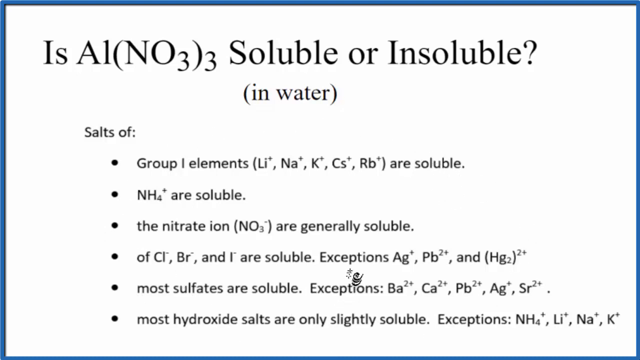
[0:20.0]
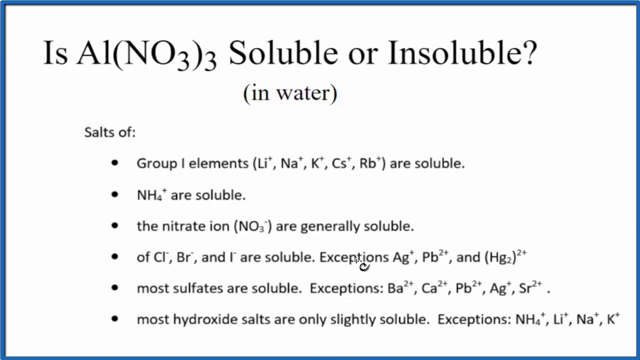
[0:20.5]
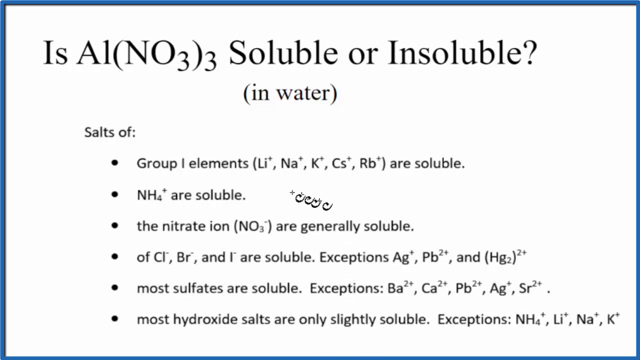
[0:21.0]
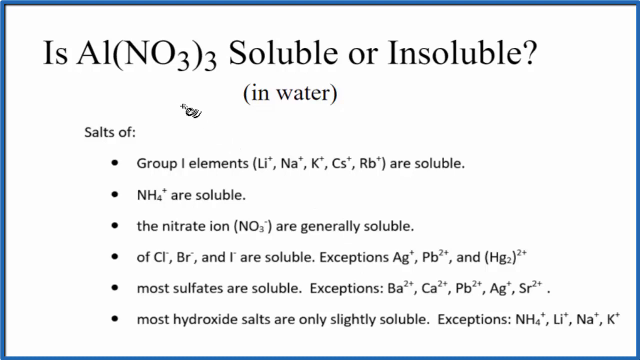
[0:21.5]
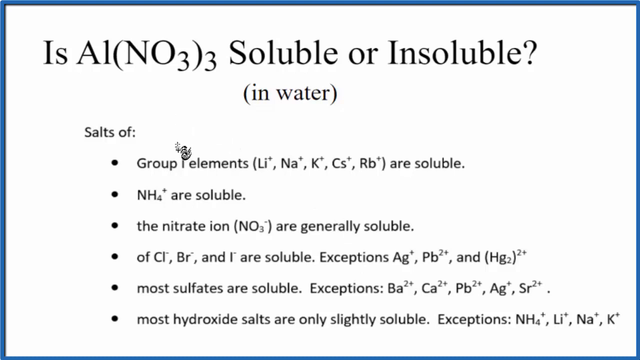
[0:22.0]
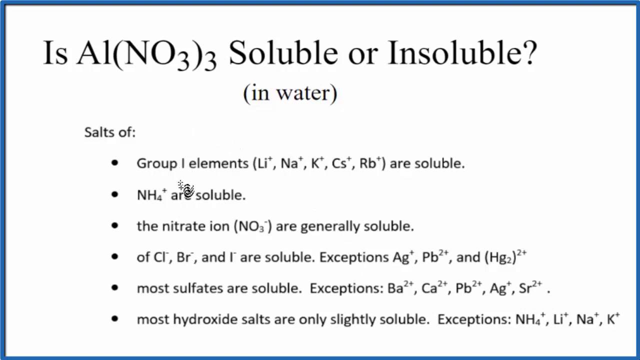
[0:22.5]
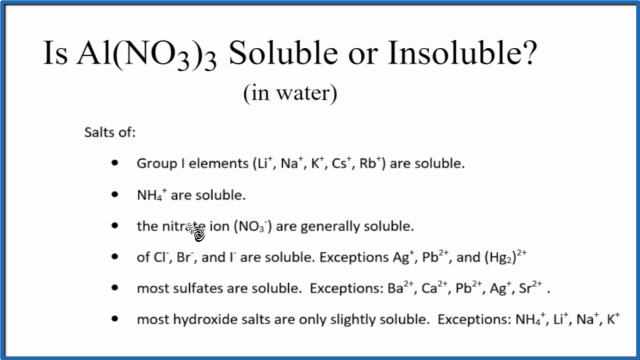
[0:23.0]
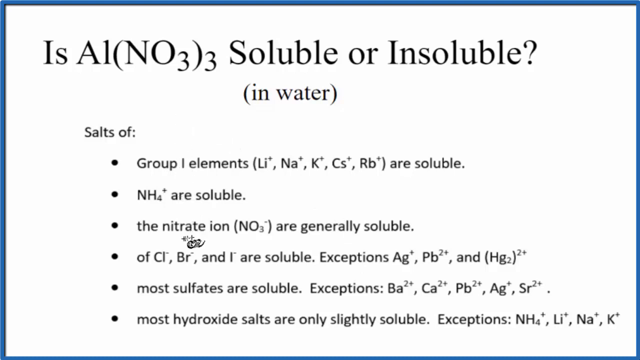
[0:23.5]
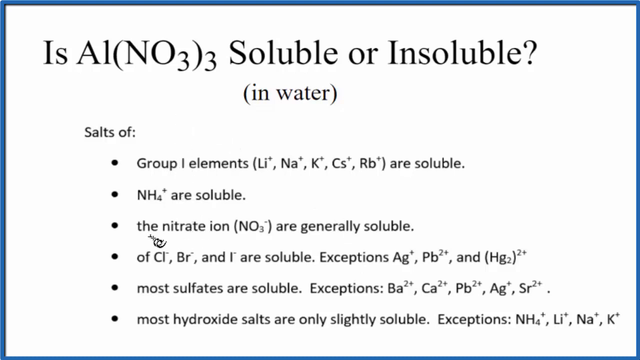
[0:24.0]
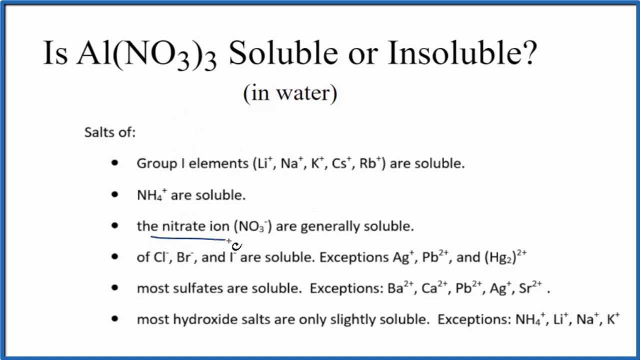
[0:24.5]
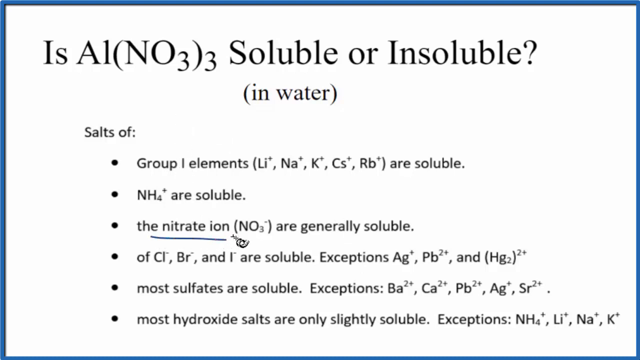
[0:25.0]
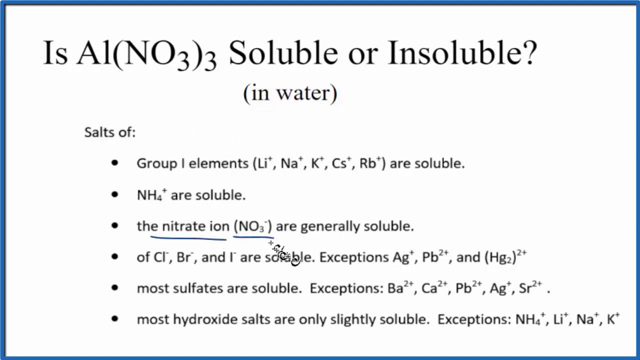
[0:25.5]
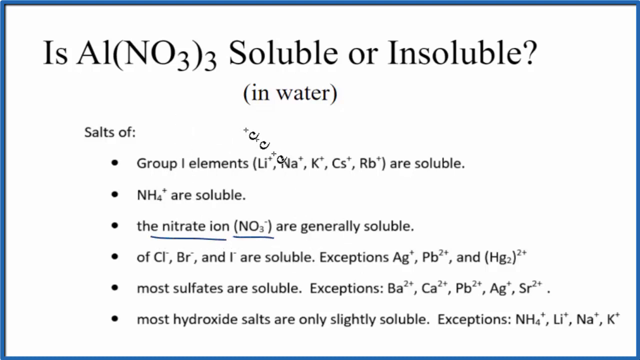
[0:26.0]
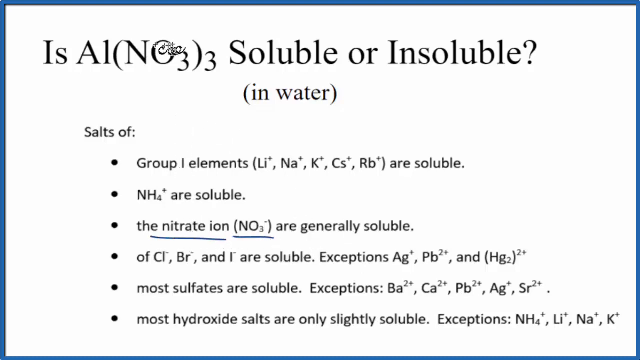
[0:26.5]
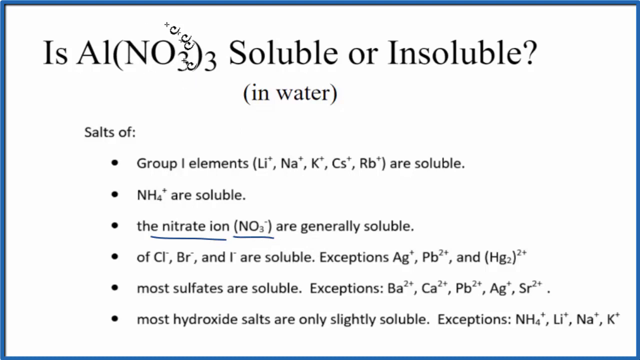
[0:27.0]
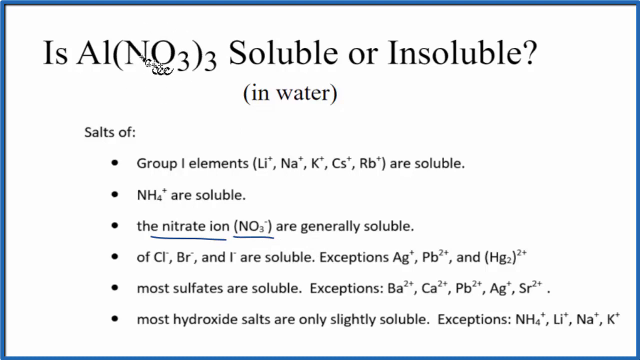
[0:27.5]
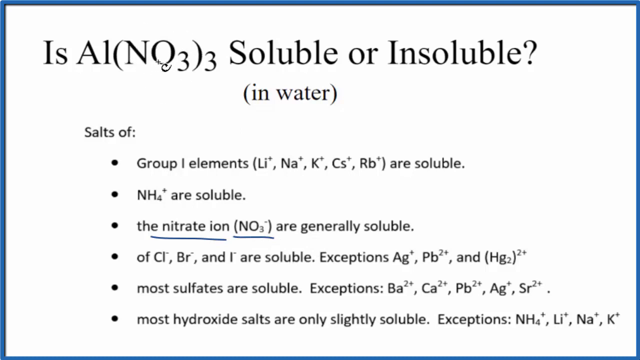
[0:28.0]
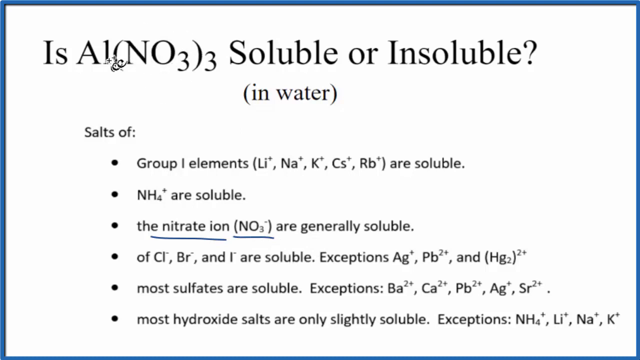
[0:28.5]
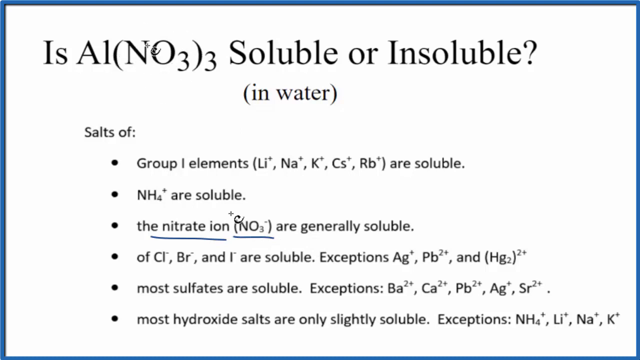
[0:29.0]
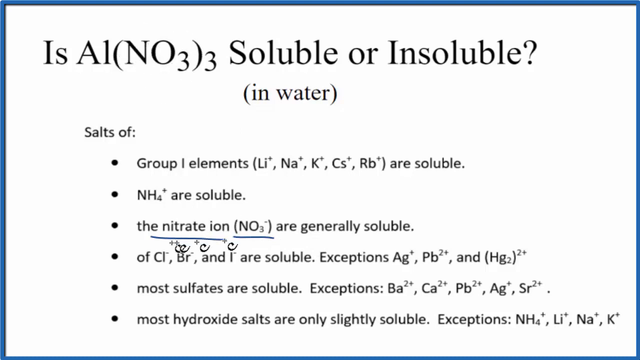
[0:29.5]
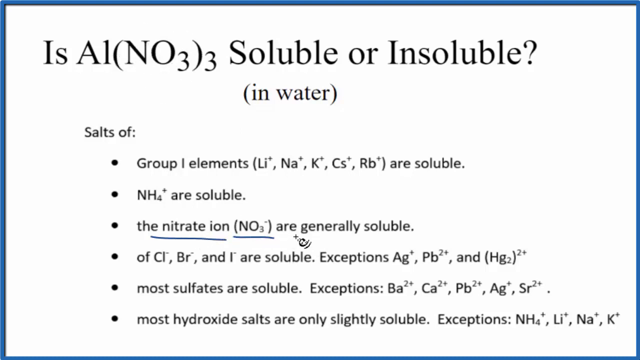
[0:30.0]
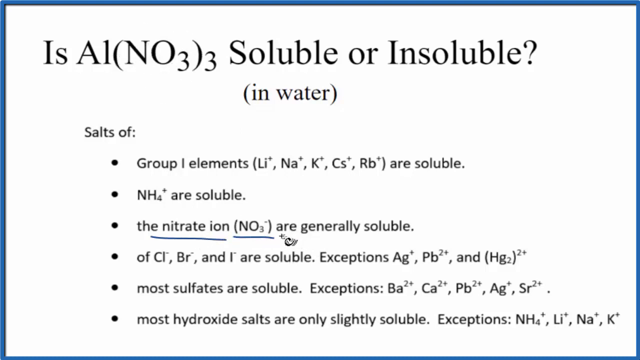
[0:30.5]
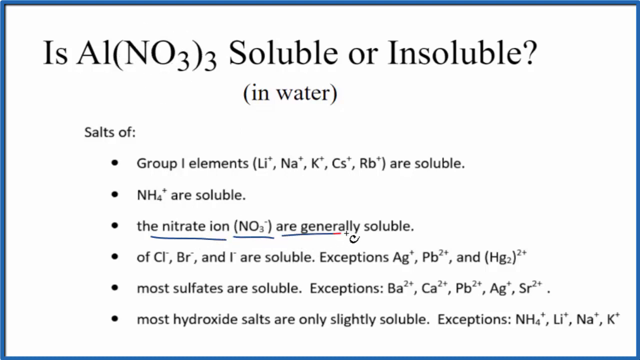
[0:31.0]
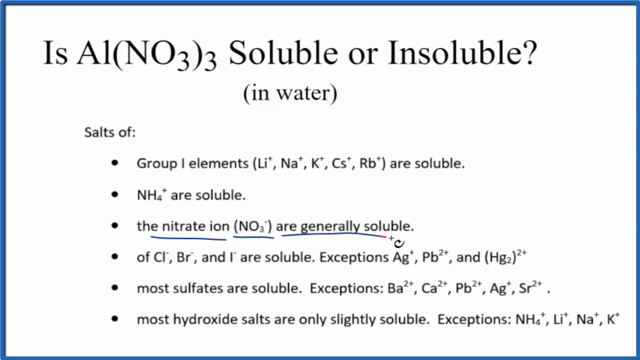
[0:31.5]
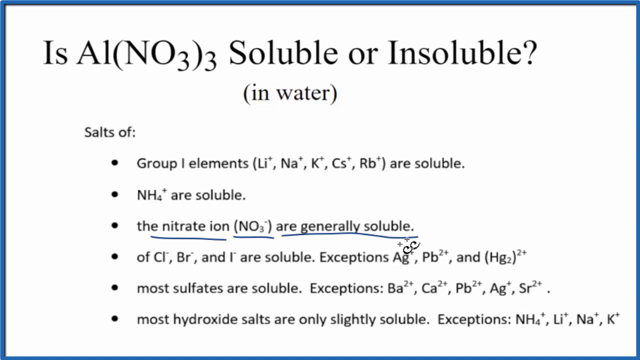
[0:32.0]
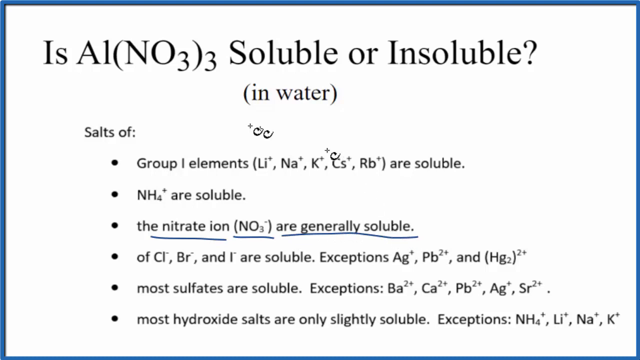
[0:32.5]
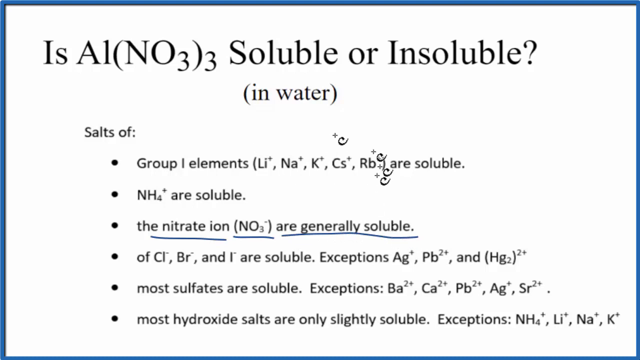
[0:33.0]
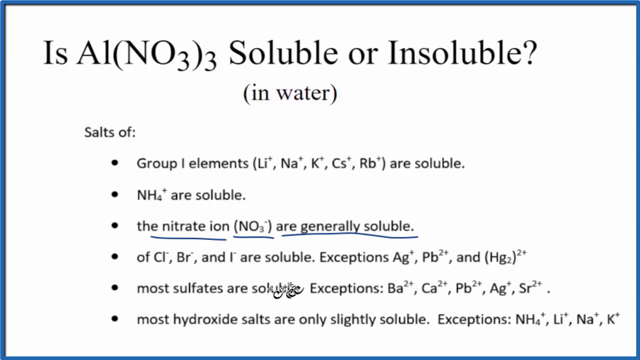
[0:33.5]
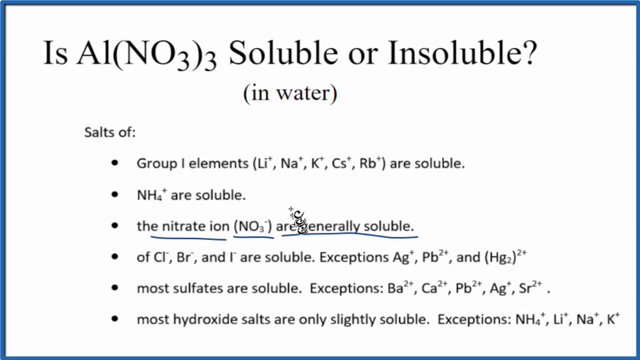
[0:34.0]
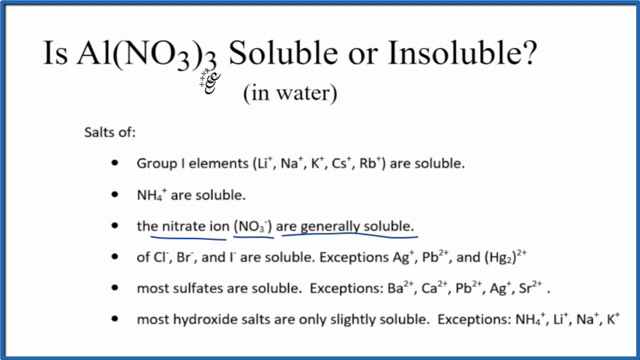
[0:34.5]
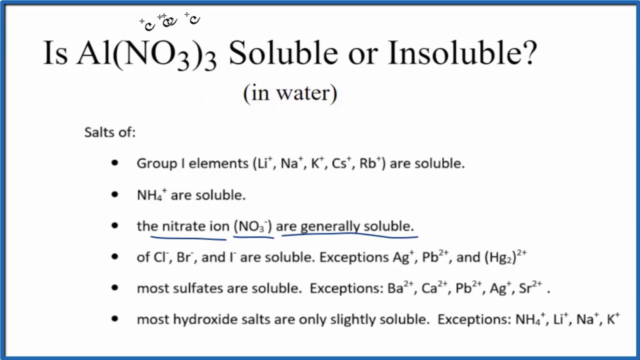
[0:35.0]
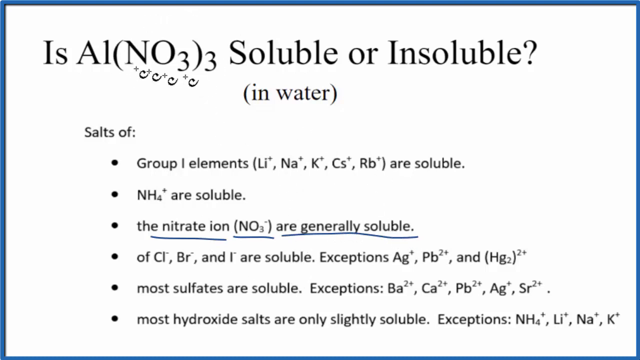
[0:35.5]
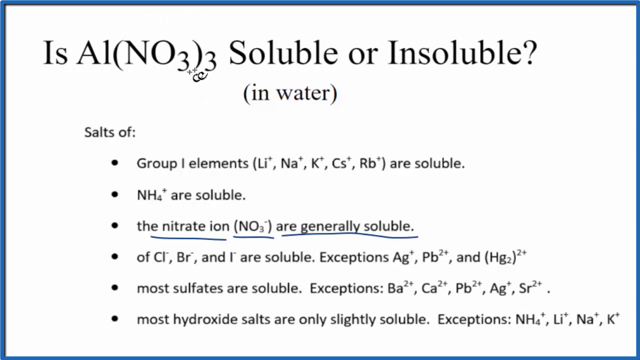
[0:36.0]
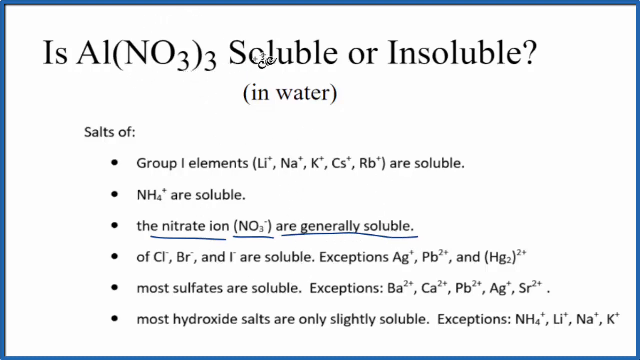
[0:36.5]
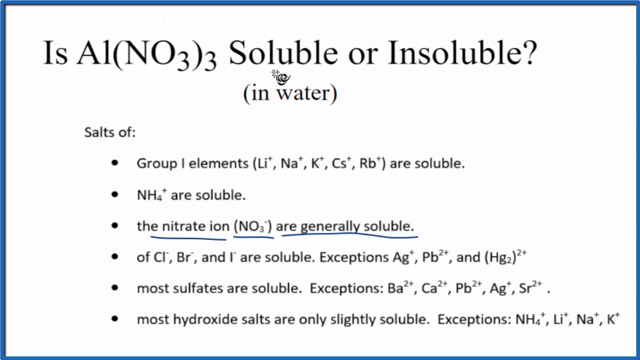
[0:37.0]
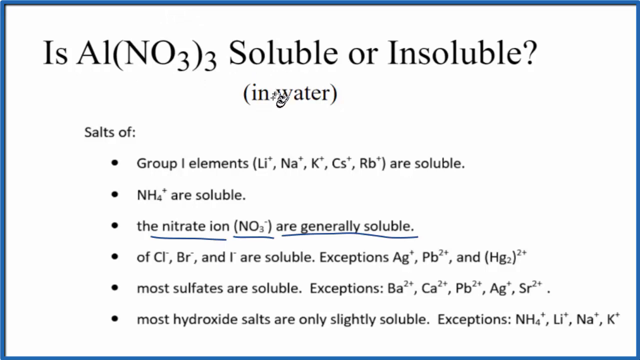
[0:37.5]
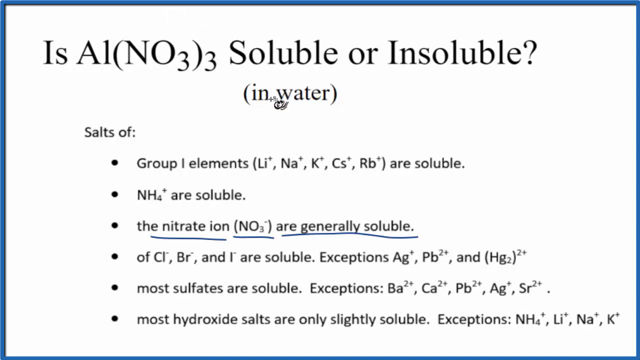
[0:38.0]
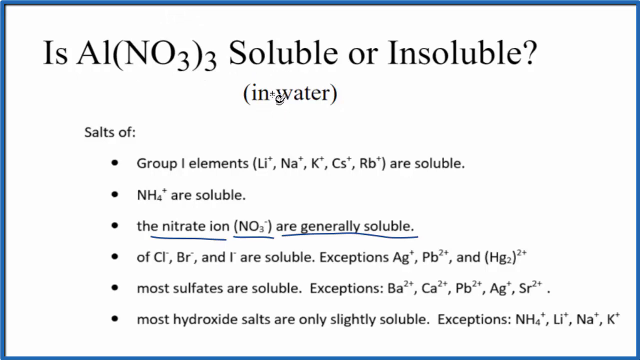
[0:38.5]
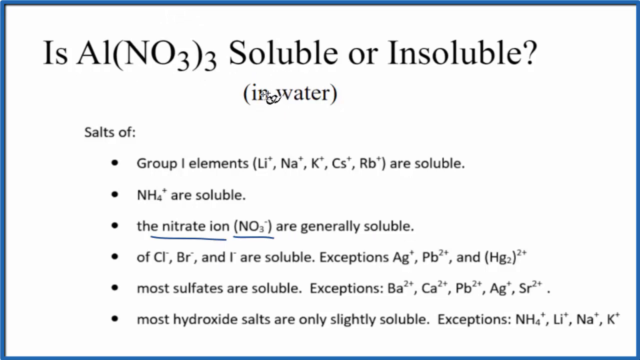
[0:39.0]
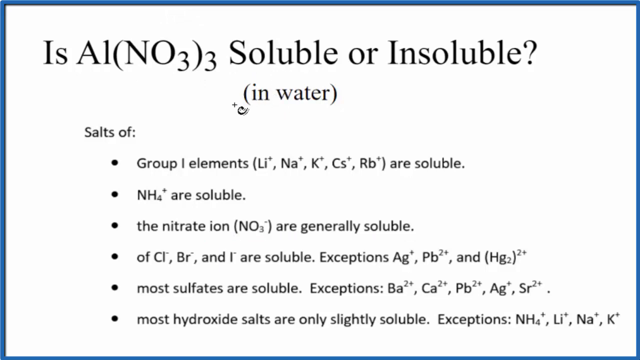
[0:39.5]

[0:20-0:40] The cursor continues to dance around the screen. The words "the nitrate ion" and "NO3" in the third bullet point are underlined. The cursor goes back up to the title and circles NO3 there as well, then comes back down to the third bullet point and underlines the words "are generally soluble". It returns to the top of the screen, circles NO3 again and hovers over "soluble" and "in water". The cursor is shaped like an elaborately drawn C, looking like the beginning of a swirl, with a small cross to its top left. As it moves it leaves a trace, so it often looks as if there is more than one cursor. Its movements are fast and quite erratic; it races around the screen throughout, and it is hard to anticipate where it will stop.